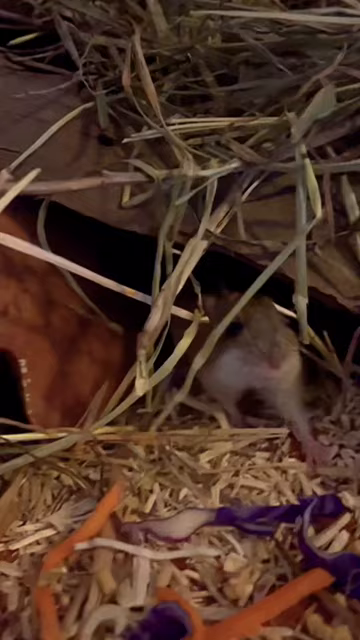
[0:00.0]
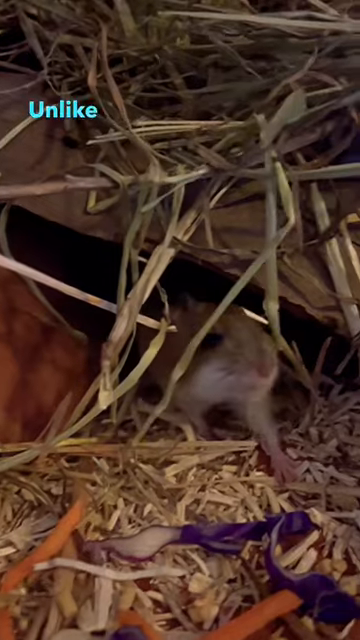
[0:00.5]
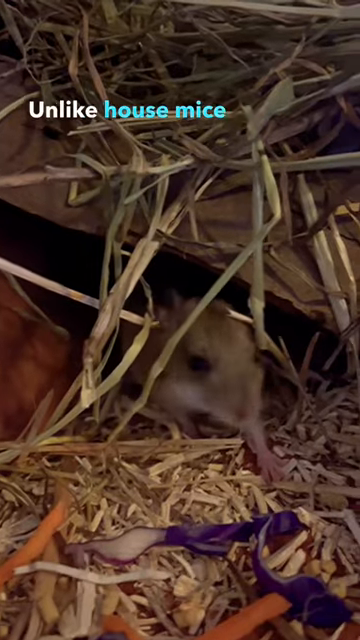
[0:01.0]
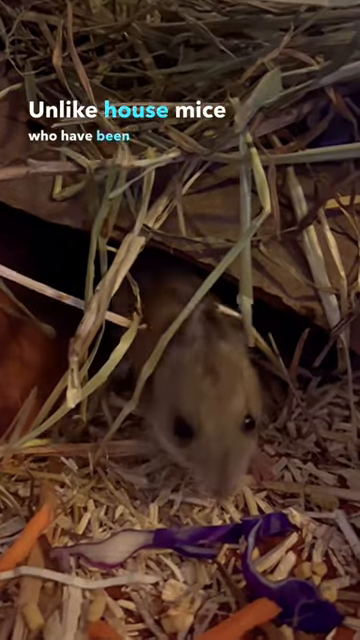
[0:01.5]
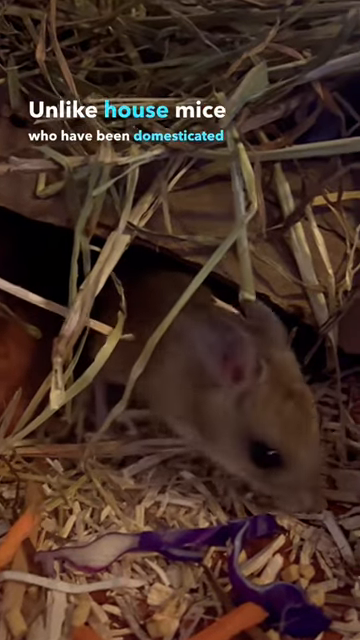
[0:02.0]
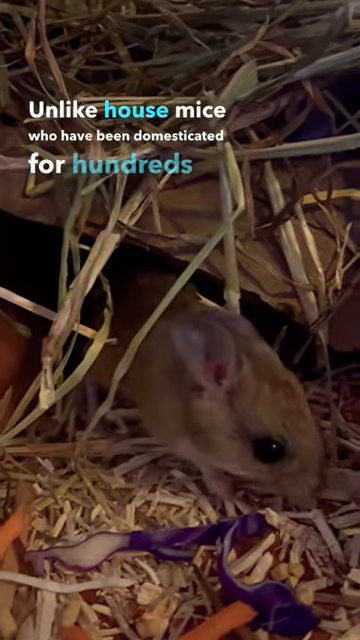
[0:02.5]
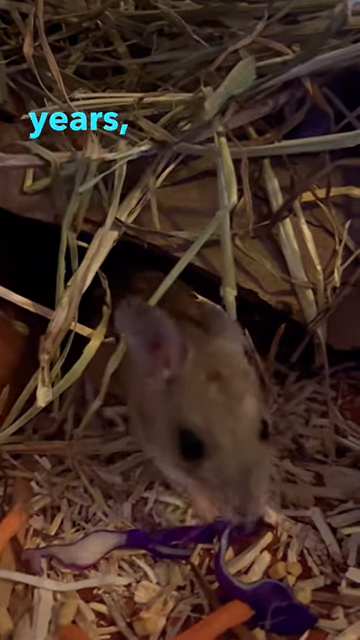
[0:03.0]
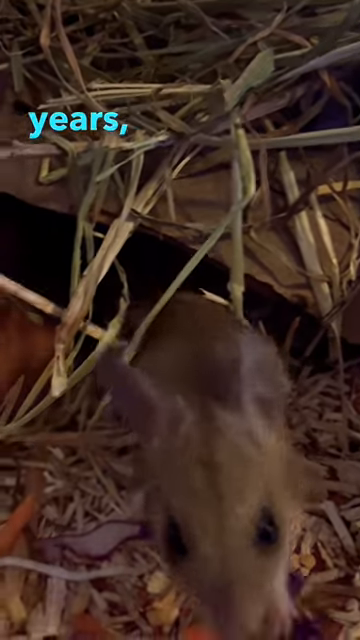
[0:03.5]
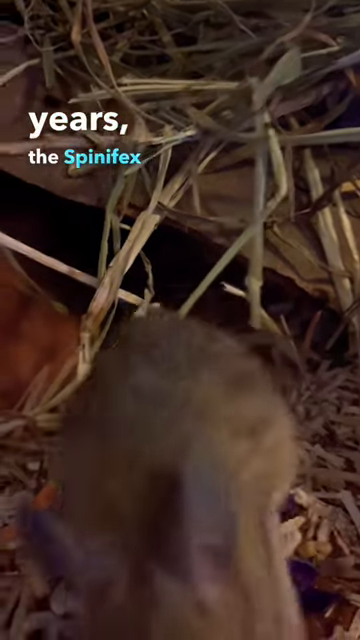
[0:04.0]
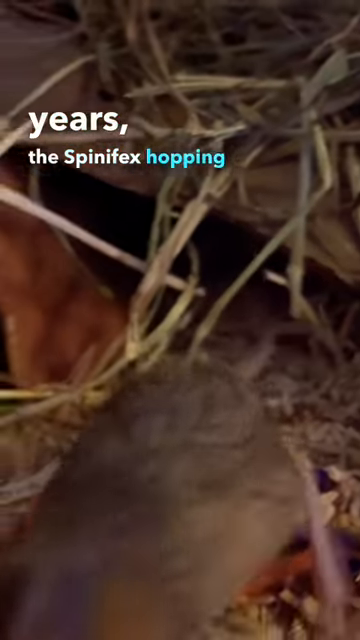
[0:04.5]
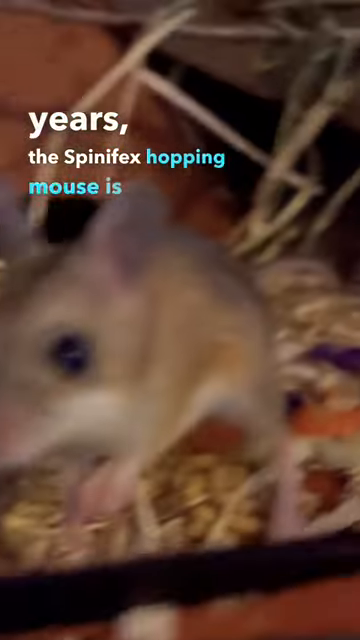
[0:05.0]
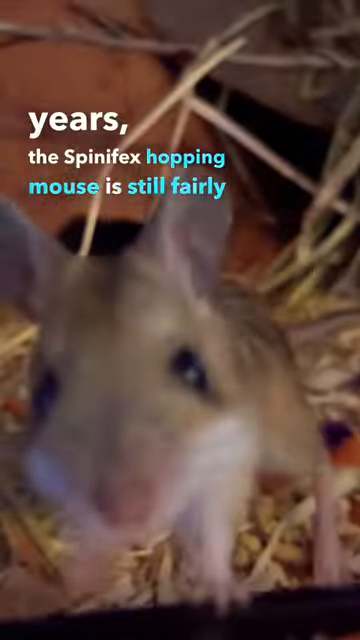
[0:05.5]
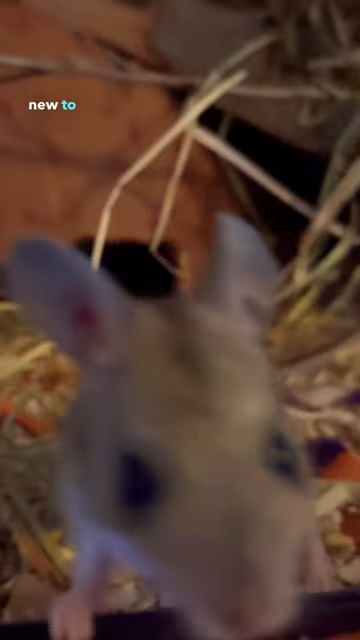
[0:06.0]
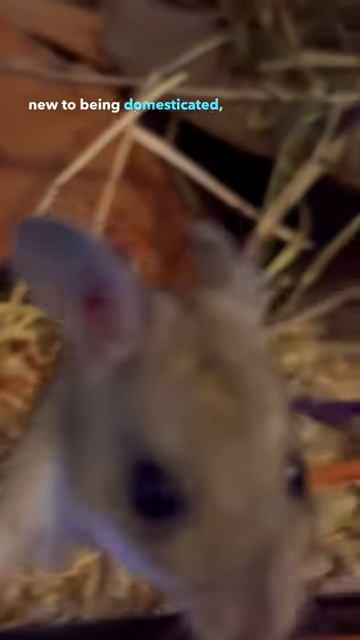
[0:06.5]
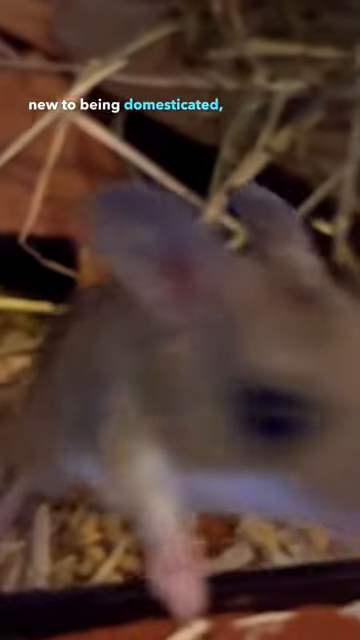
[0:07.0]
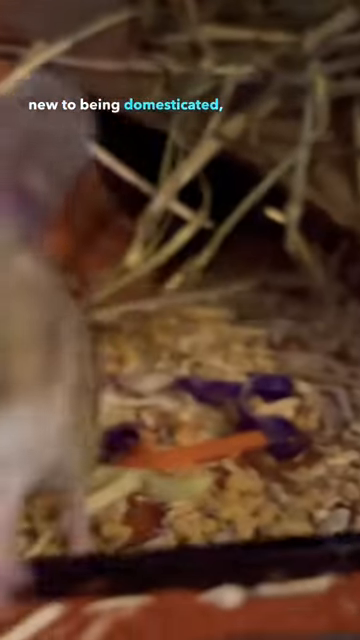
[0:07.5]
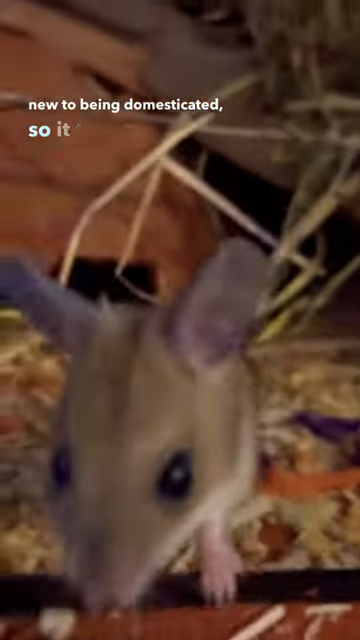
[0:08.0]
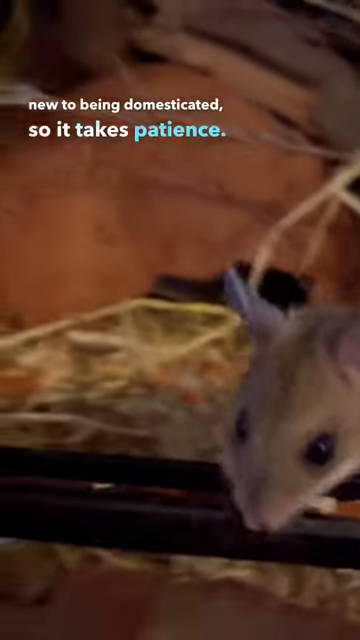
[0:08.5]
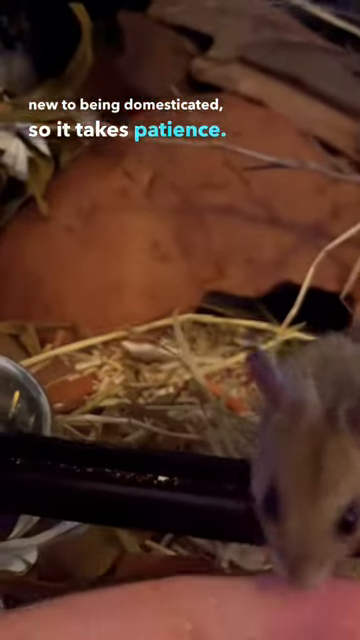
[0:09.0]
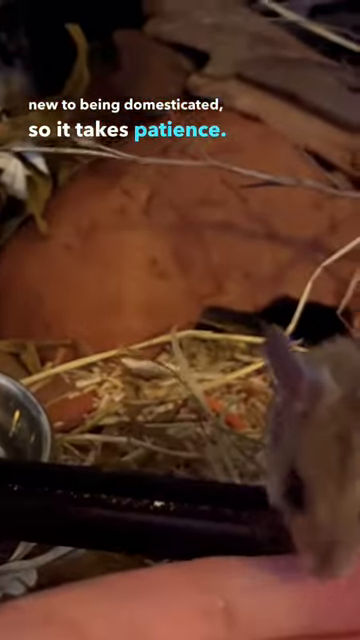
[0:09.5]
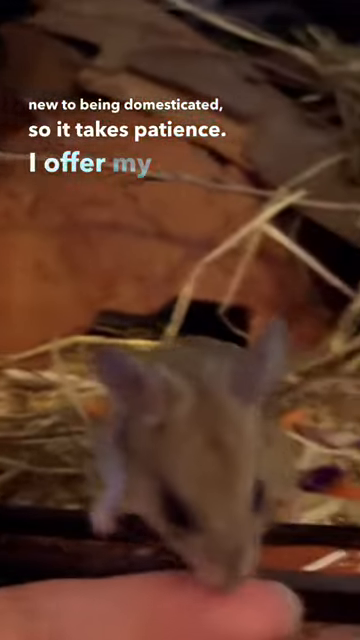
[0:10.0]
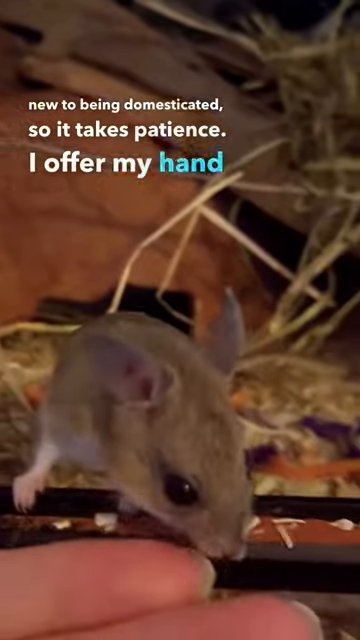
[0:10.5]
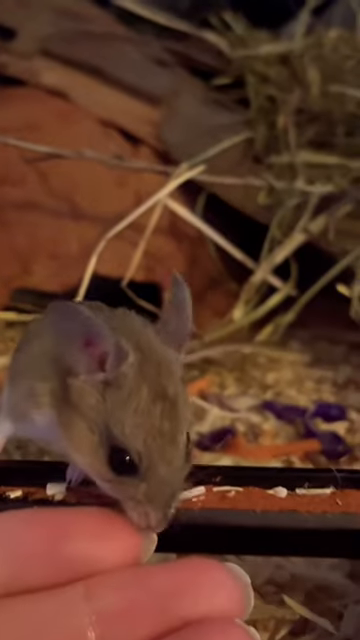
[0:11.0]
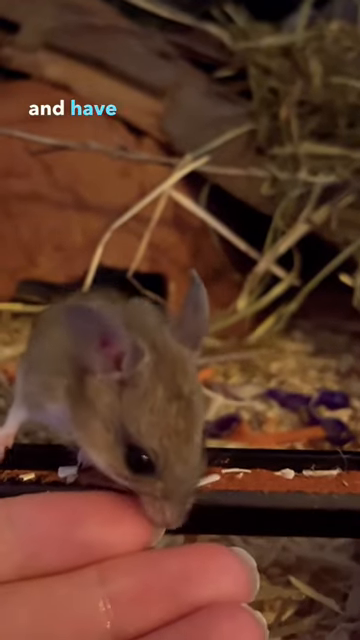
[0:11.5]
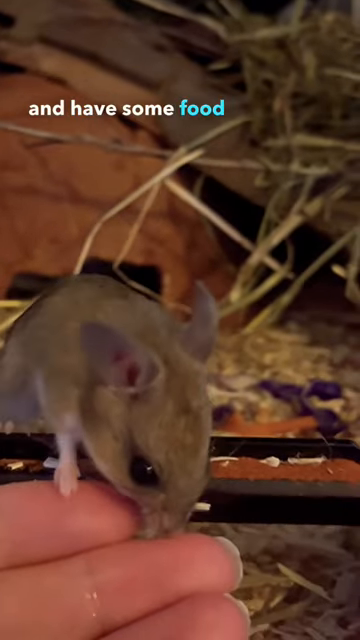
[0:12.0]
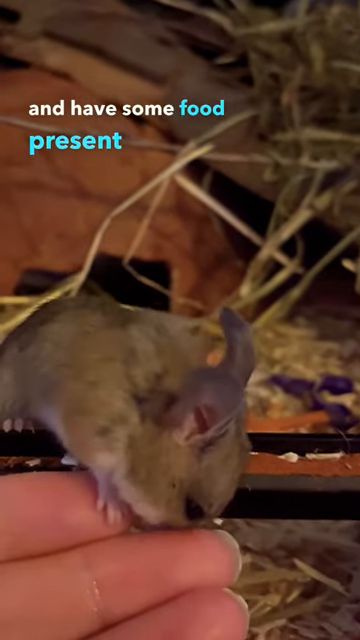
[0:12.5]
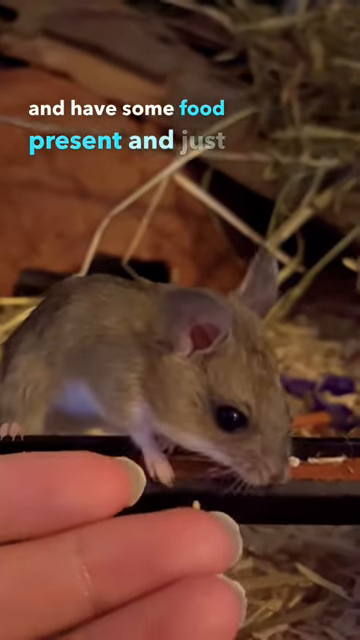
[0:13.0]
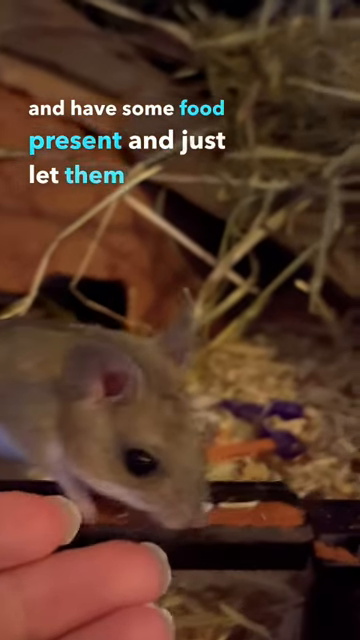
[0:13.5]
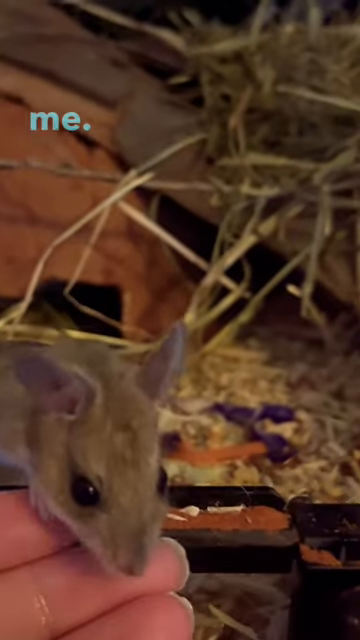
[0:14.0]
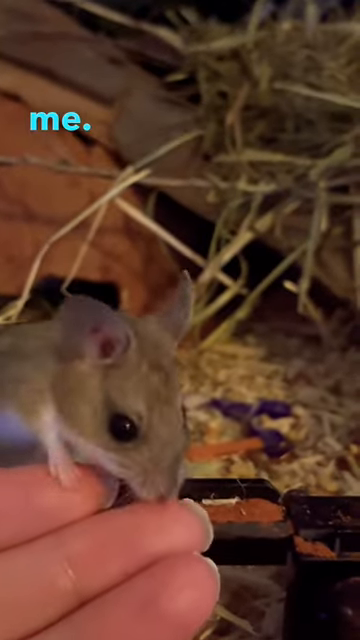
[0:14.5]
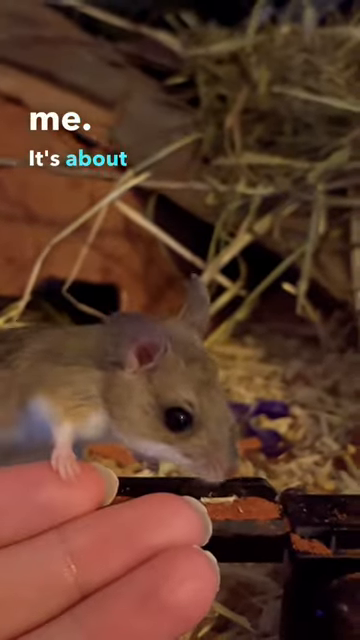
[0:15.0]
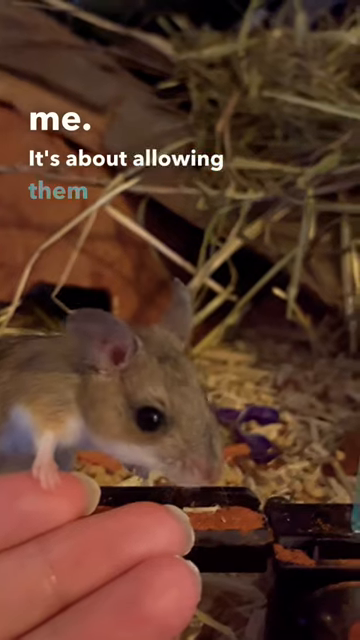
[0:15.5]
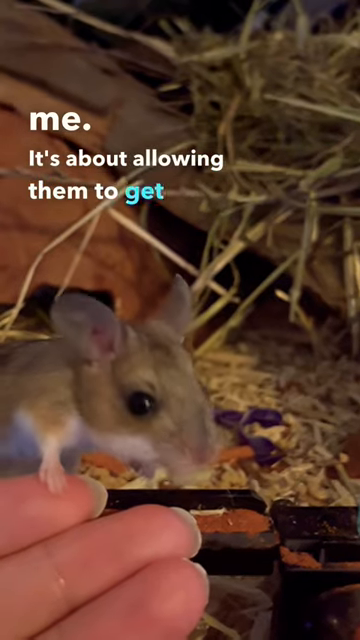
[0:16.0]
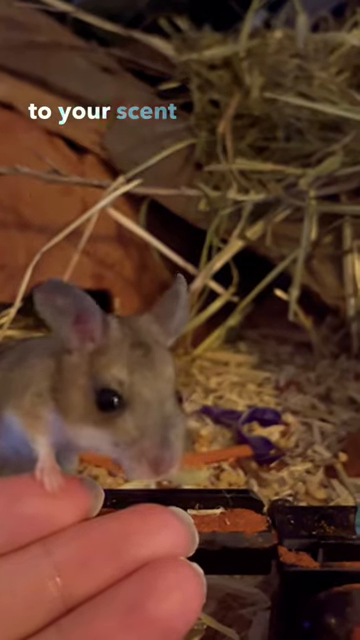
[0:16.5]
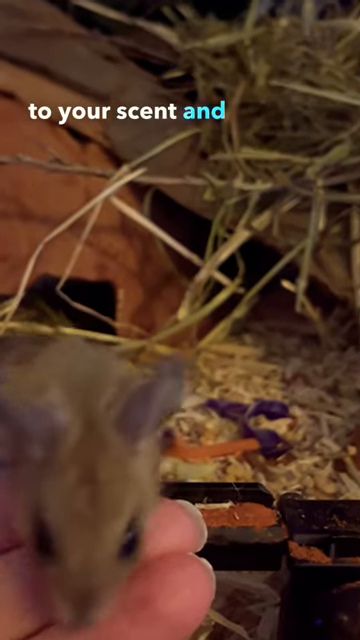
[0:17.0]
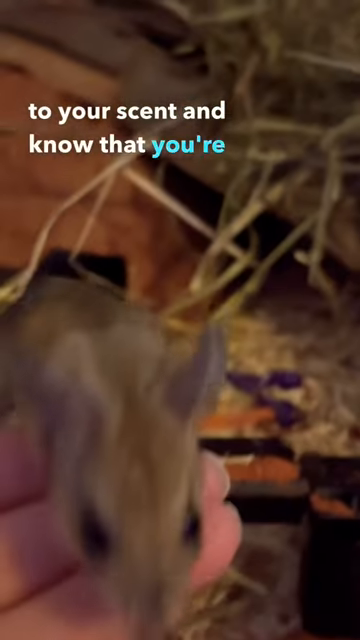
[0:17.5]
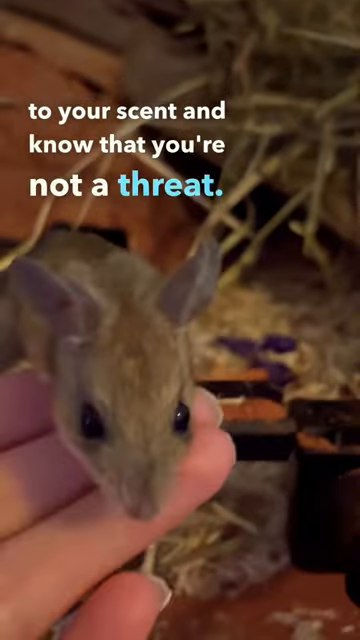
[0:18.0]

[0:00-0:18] A little mouse's habitat is shown. On-screen text reads: "unlike house mice who have been domesticated for hundreds of years, the spinifex hopping mouse is new to being domesticated so it takes patience. I offer my hand and have some food present and just let them come to me. It's about allowing them to get used to your scent and know that you're not a threat." The mice have big ears like a kangaroo and long faces; they look typically like a mouse but a little bit different. A woman has her hand out, and the mouse comes up and sniffs her fingers, checking her out. It doesn't really look scared at all. Food that looks like cabbage pieces, salad and carrots has been thrown in on top of the shavings. The little mouse runs out from a little place where it was hiding and sniffs her fingers, apparently checking whether she is a threat.